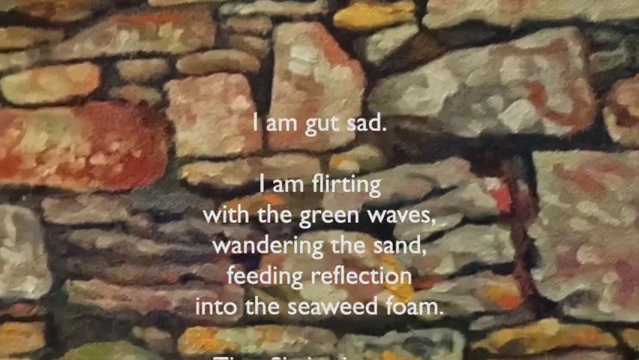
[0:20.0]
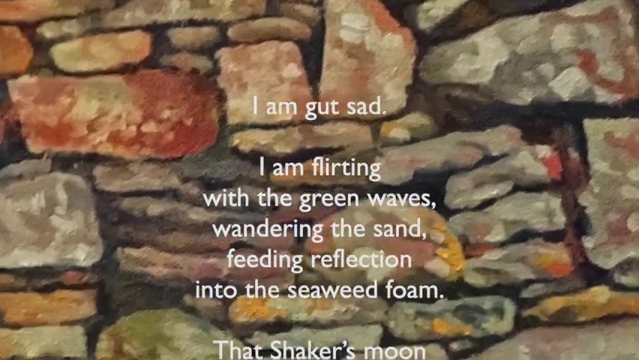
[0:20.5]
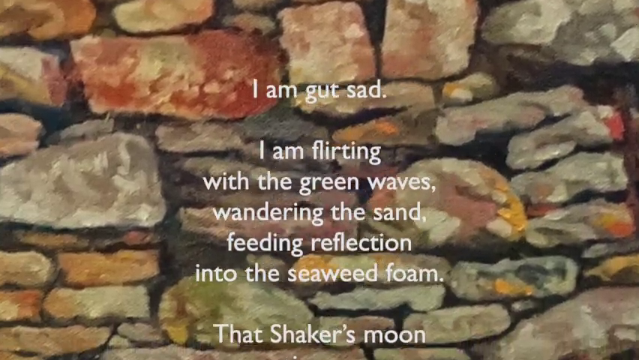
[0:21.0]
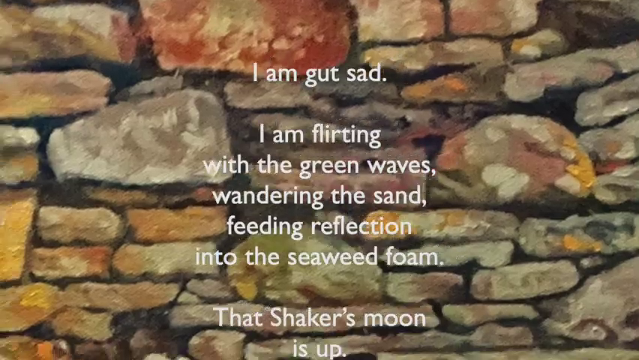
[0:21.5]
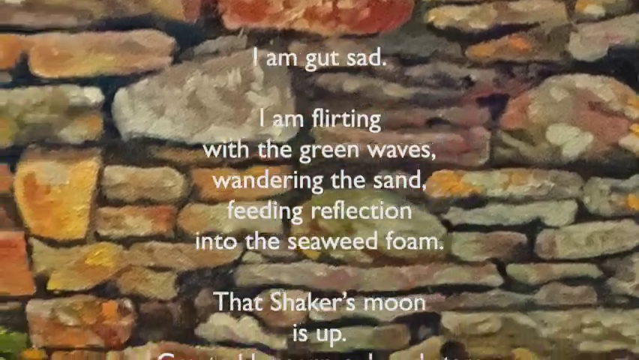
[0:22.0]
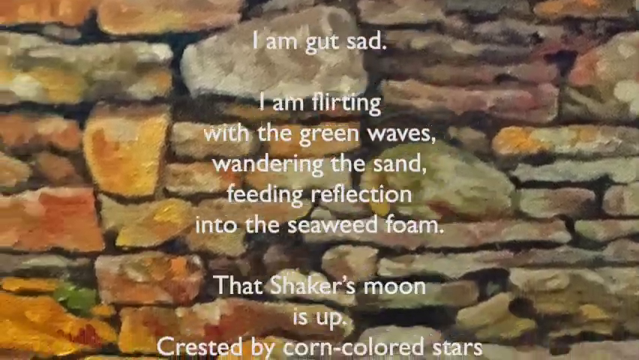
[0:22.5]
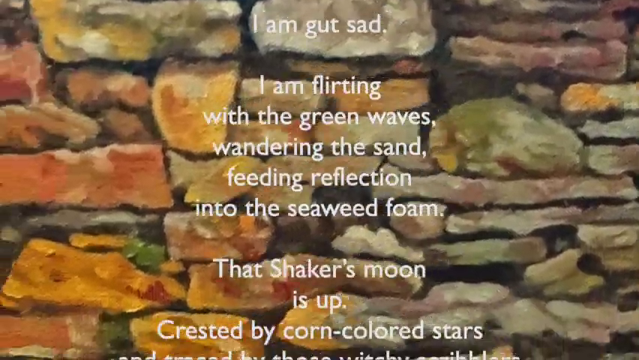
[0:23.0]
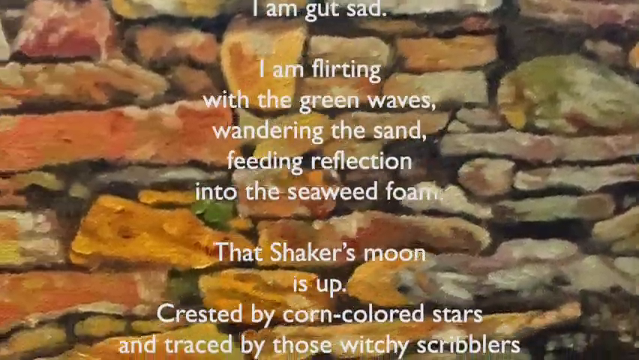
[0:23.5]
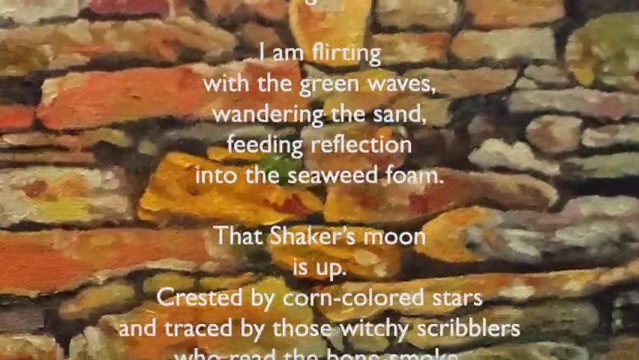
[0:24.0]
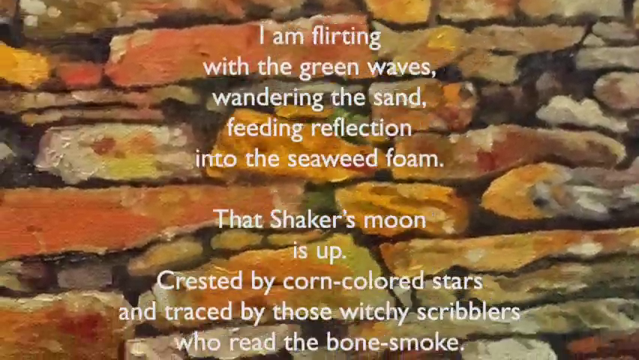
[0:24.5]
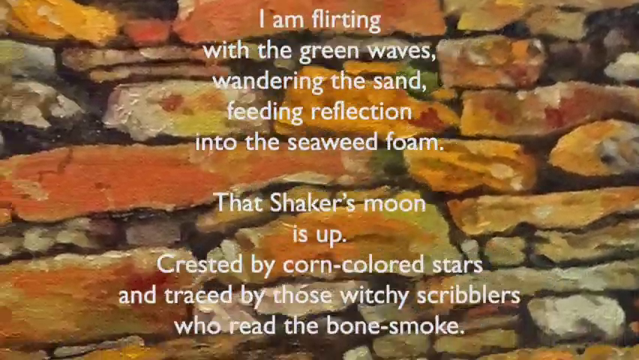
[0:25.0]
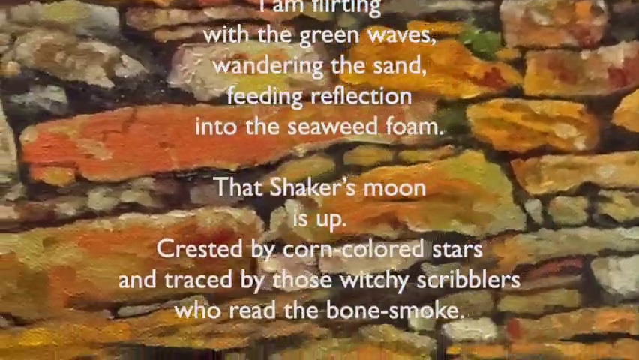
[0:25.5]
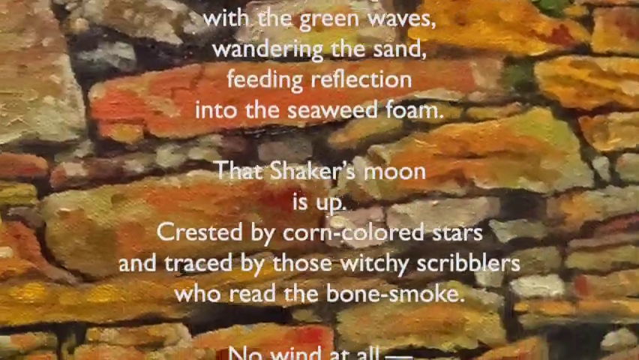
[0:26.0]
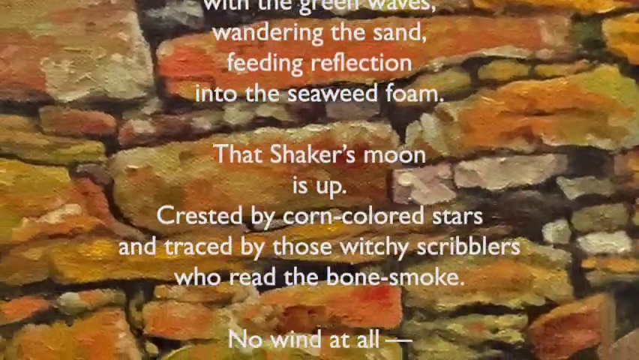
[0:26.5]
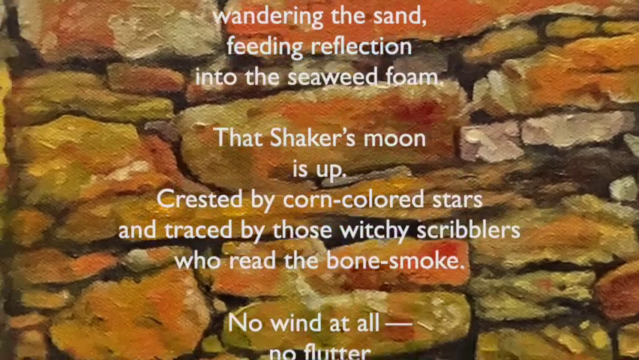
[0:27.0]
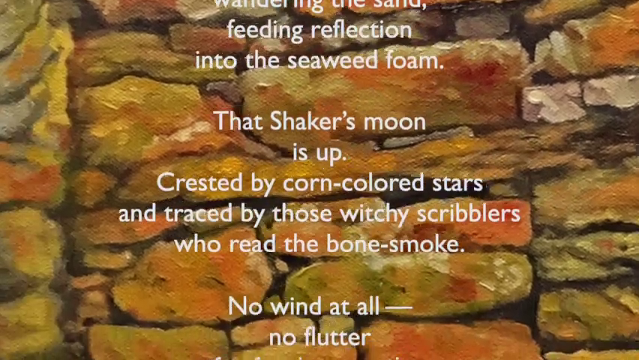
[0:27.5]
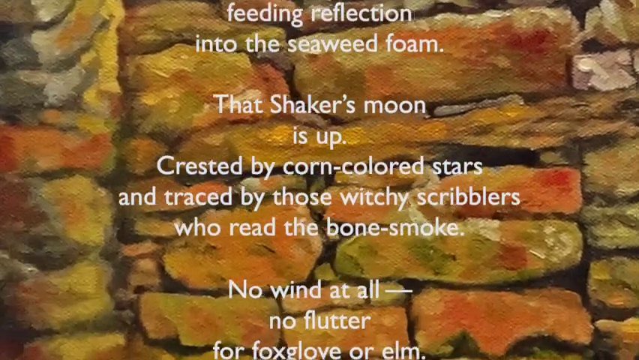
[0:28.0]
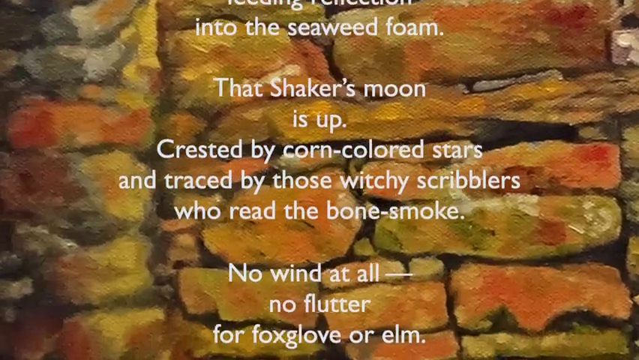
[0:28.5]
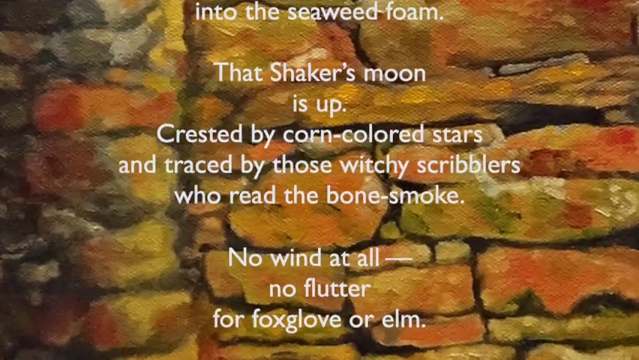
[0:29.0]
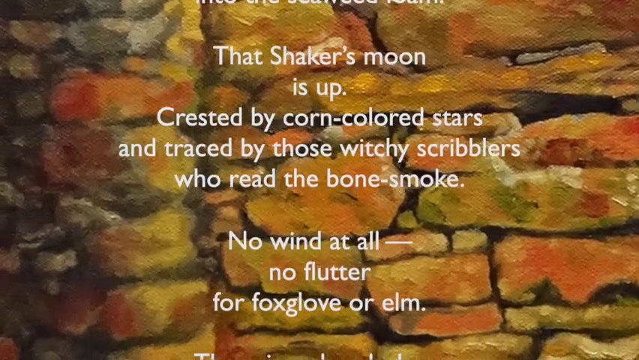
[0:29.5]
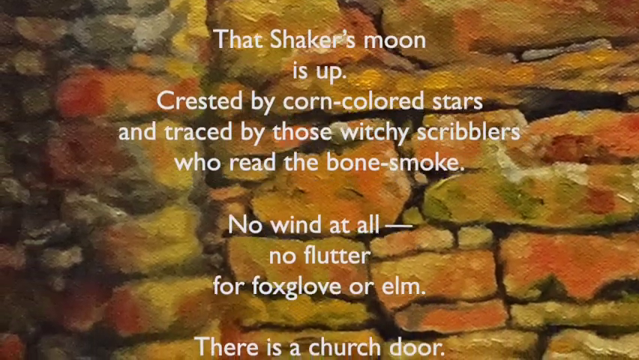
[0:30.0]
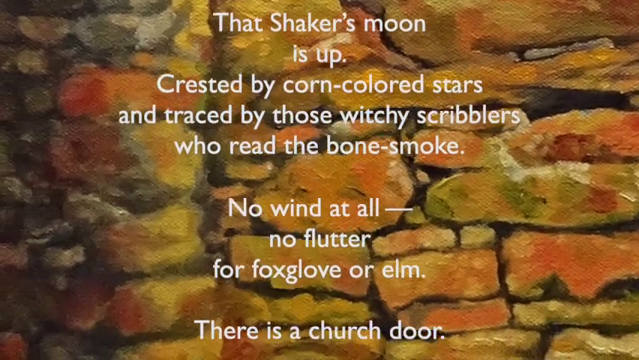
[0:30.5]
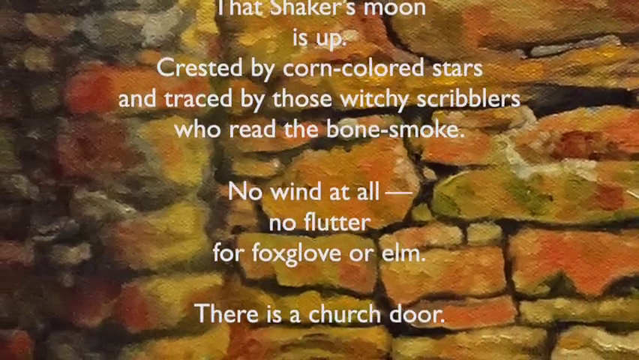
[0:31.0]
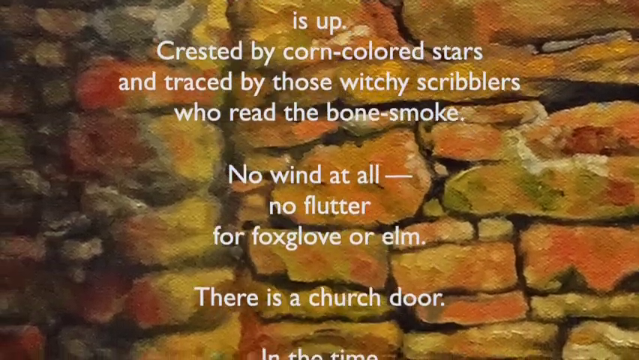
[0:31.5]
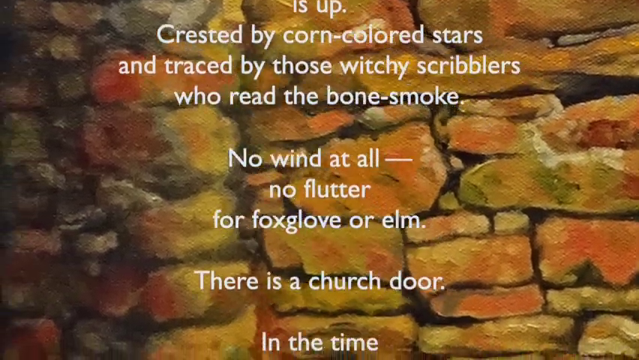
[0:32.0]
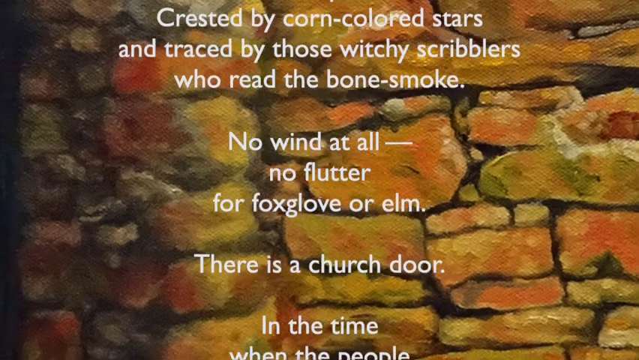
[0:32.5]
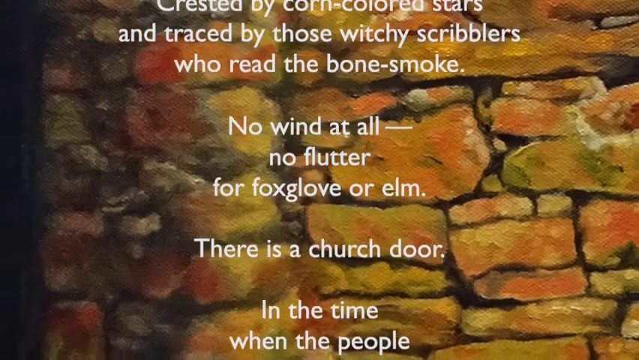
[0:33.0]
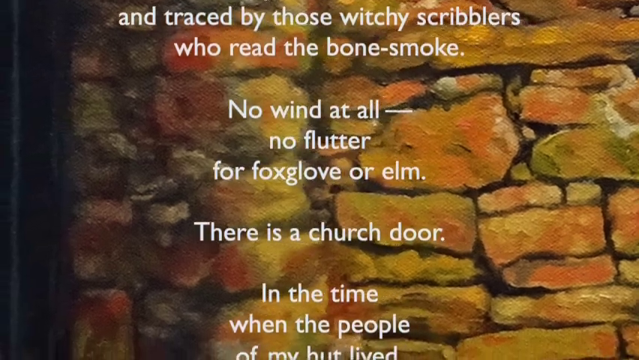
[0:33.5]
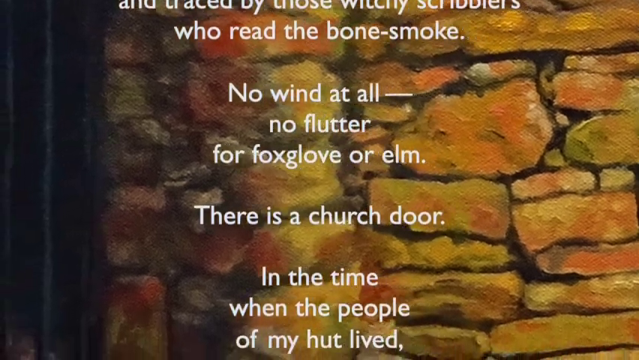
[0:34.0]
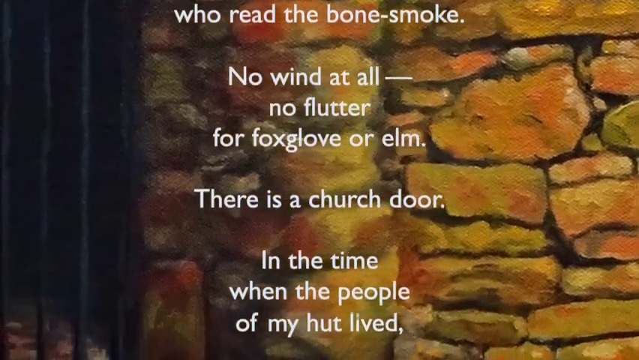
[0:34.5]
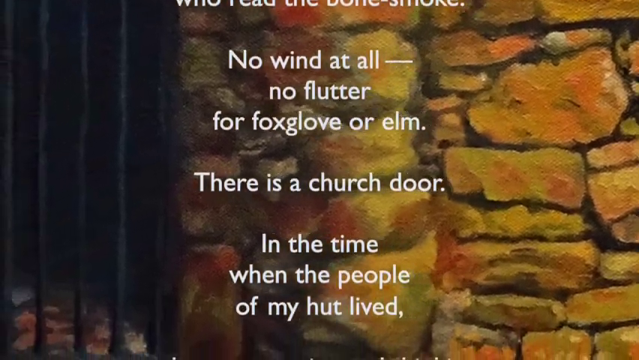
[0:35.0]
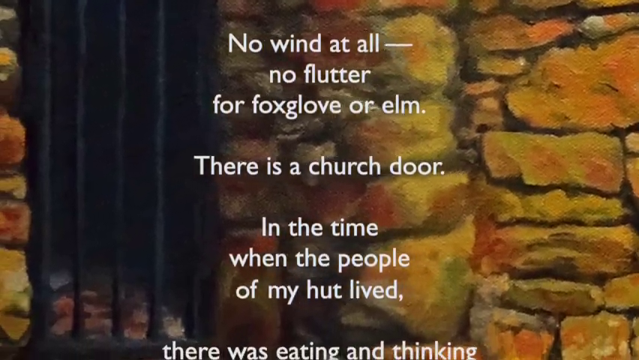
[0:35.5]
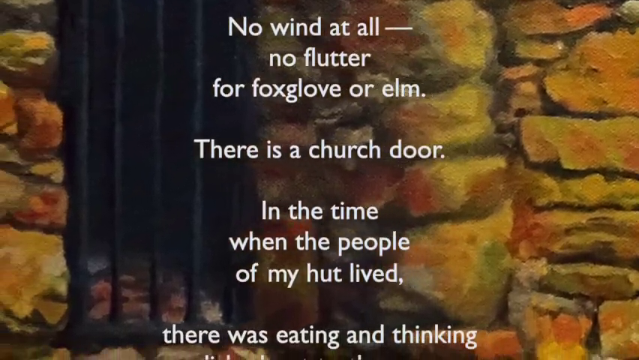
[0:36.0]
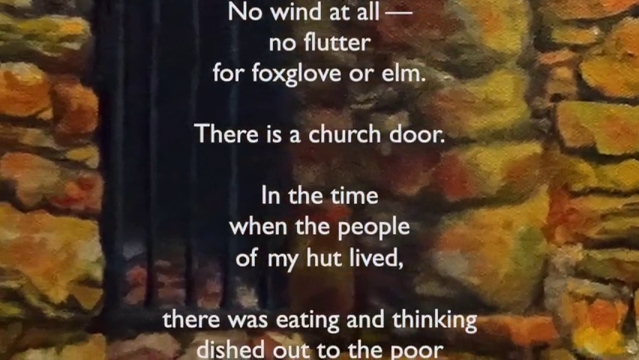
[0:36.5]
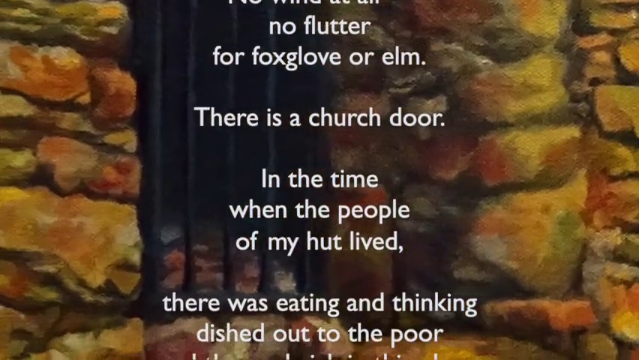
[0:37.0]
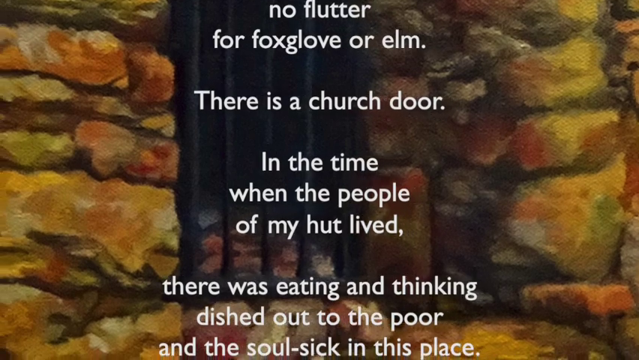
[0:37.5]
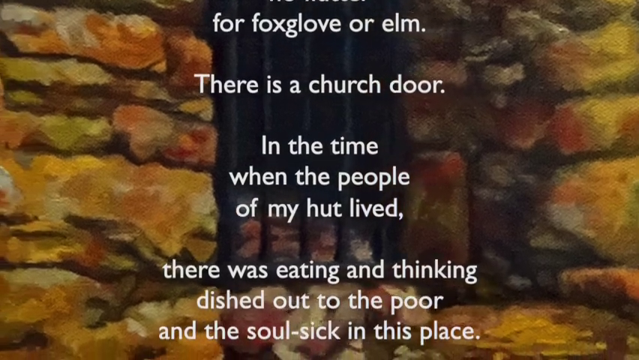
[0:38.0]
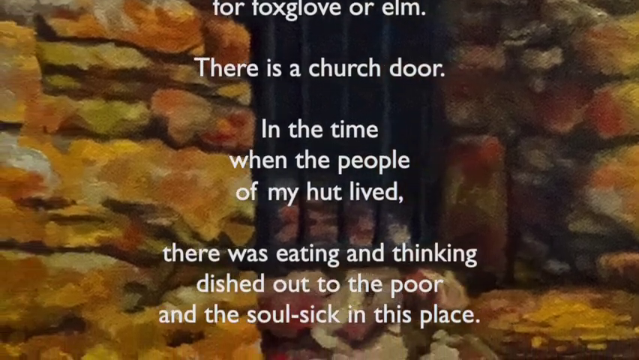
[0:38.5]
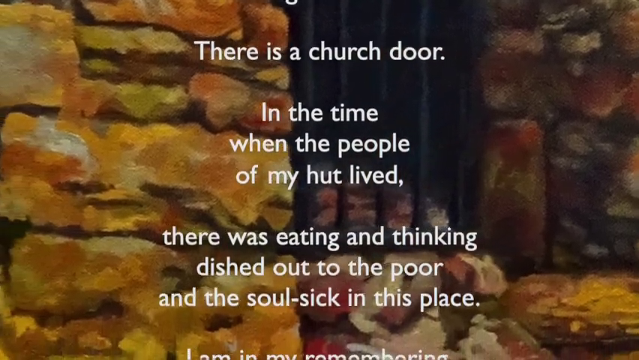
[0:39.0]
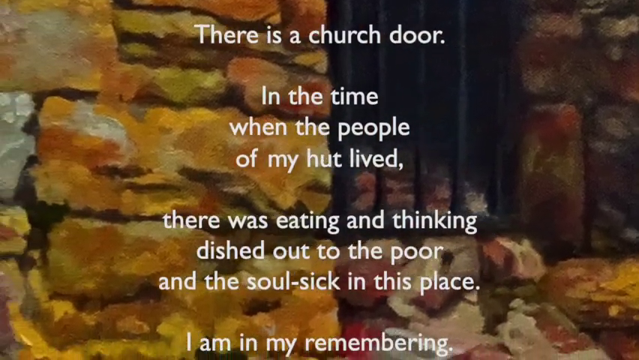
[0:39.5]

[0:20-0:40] The close-up of the building continues, showing that it is made of cobblestones in reds, yellows, grays, whites and off-white, with the crevices visible between them. It appears not to be a real building but a painting of some sort, or a drawing of a building that has been colored in, serving as the backdrop for the poem. The text reads: "I am gut-sad. I am flirting with the green waves, wandering the sand, feeding reflection into the seaweed foam. That shaker's moon is up, crested by corn-colored stars," followed by "No wind at all, no flutter for a foxglove or elm. This is a church door, and the time when the people of my hut lived. There was eating and thinking dished out to the poor and the soul-sick in this place." The poem cuts off there, and the screen pans from right to left.